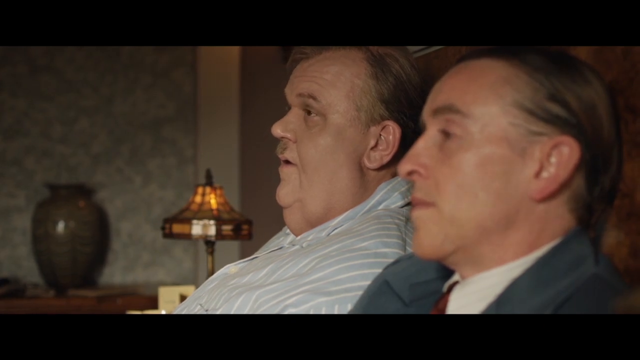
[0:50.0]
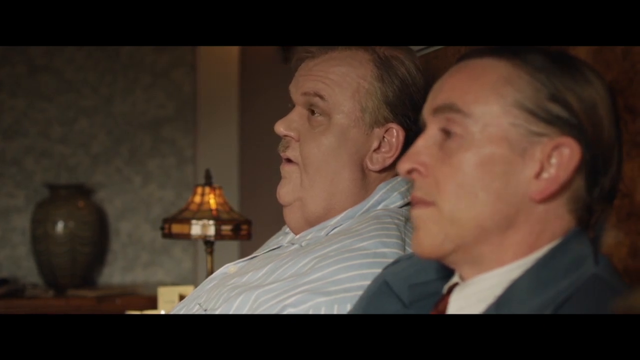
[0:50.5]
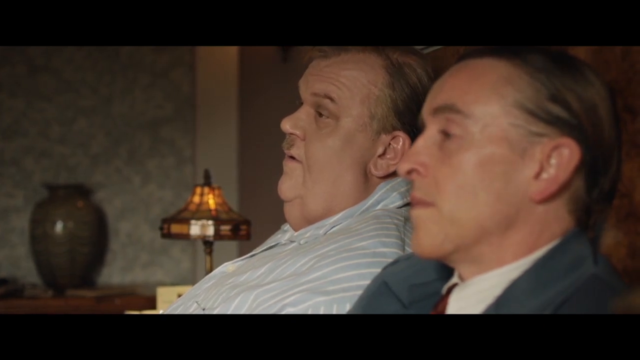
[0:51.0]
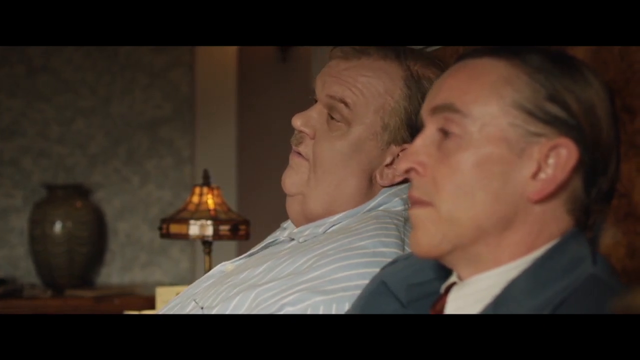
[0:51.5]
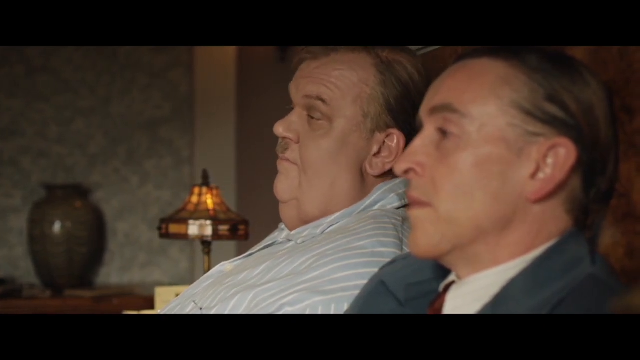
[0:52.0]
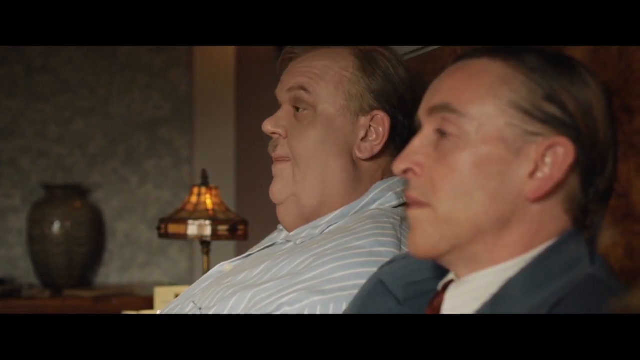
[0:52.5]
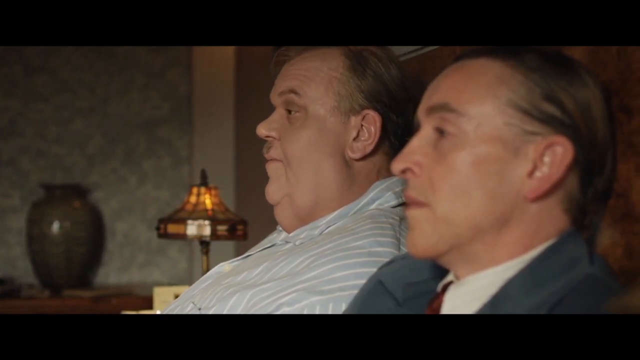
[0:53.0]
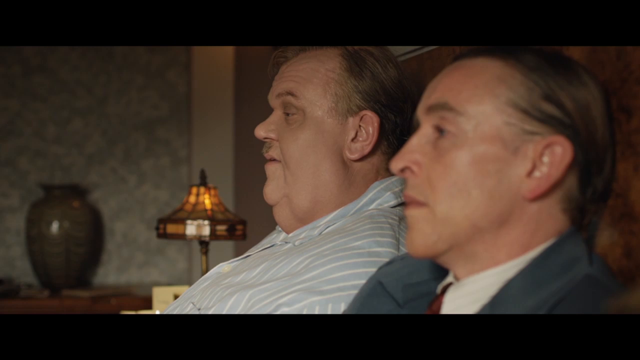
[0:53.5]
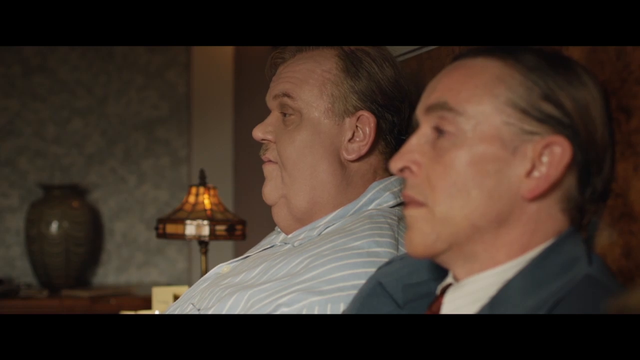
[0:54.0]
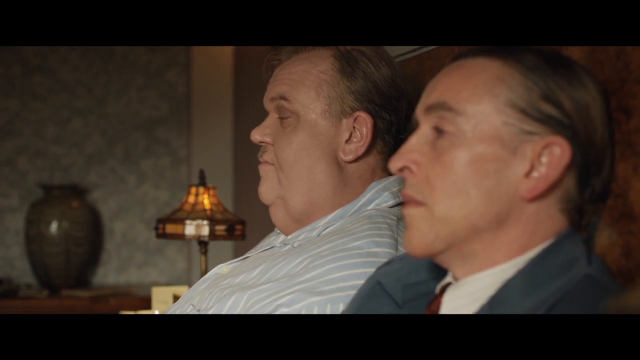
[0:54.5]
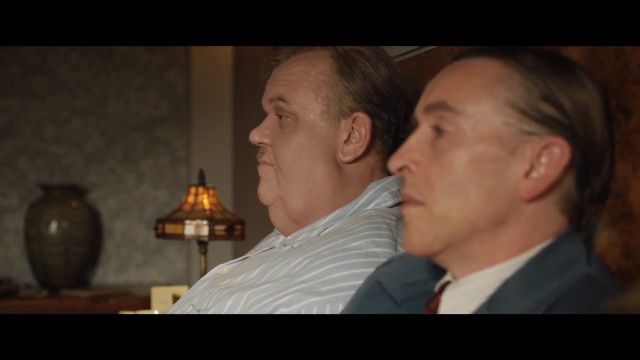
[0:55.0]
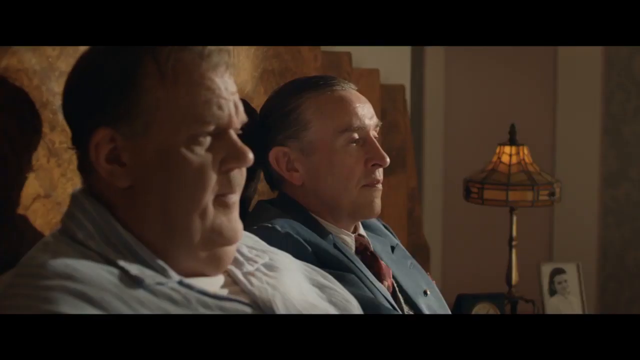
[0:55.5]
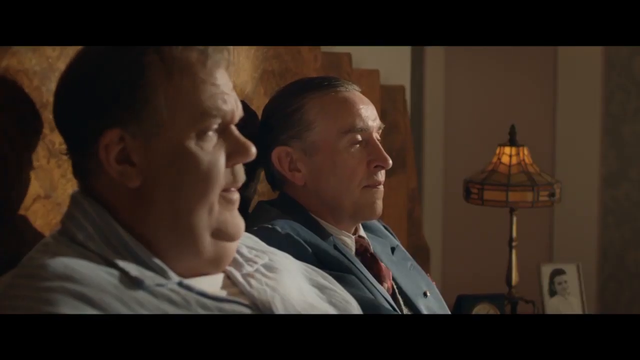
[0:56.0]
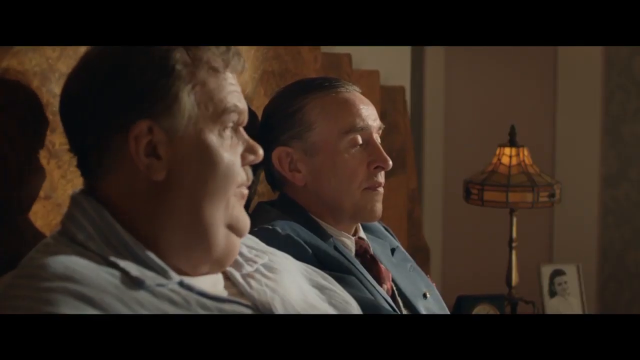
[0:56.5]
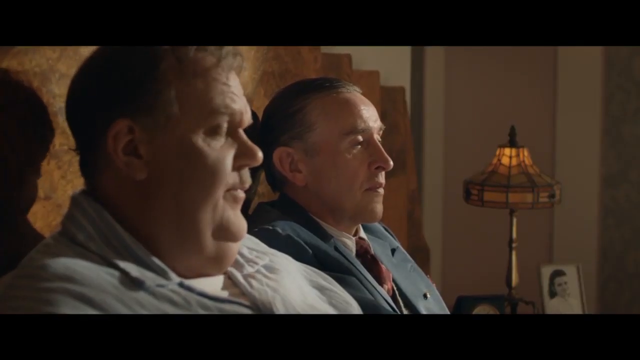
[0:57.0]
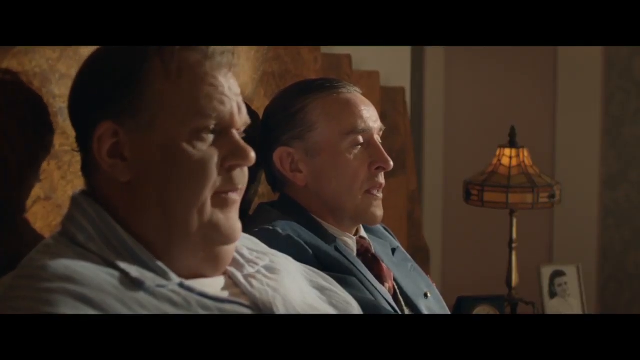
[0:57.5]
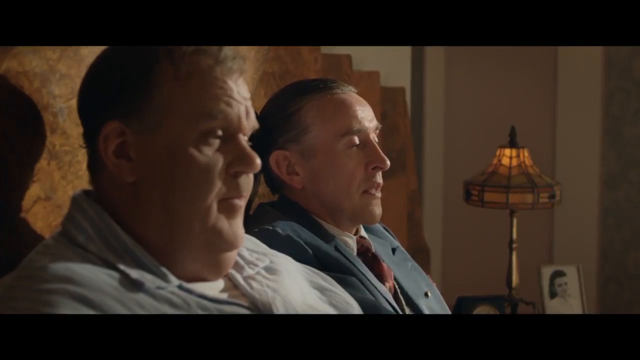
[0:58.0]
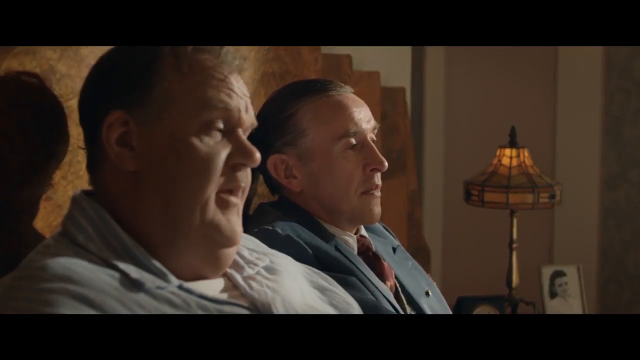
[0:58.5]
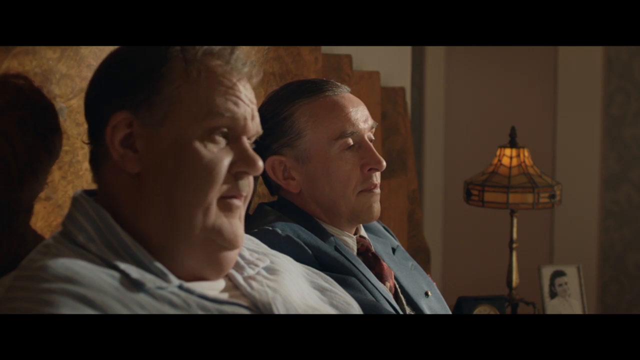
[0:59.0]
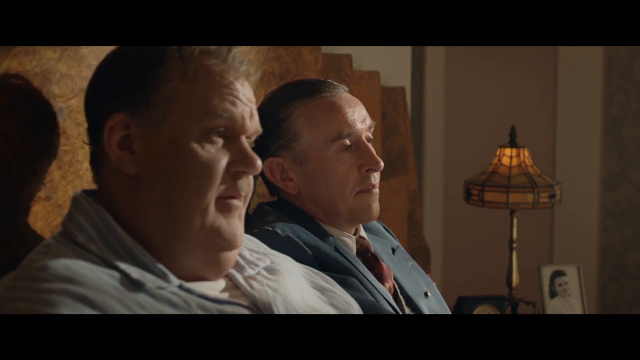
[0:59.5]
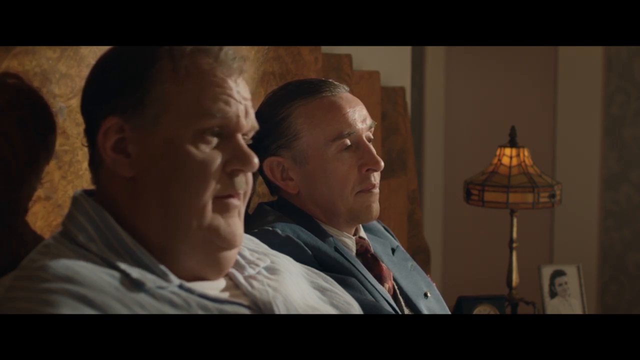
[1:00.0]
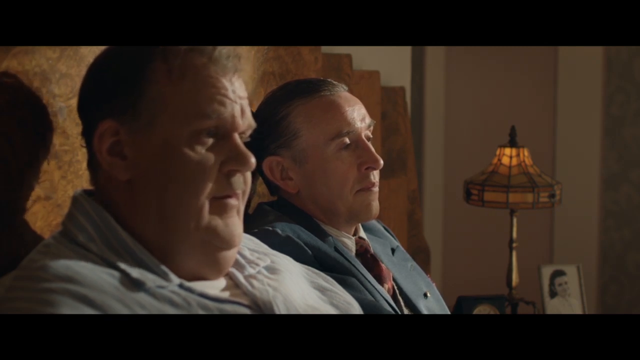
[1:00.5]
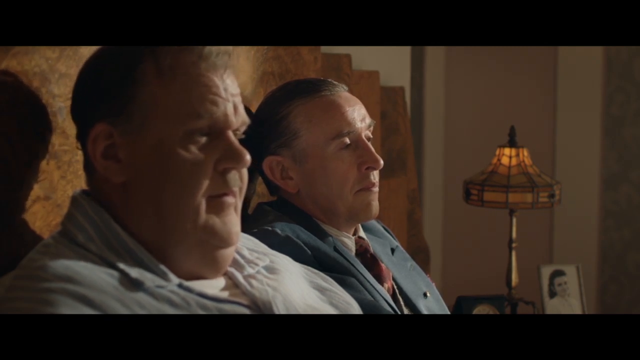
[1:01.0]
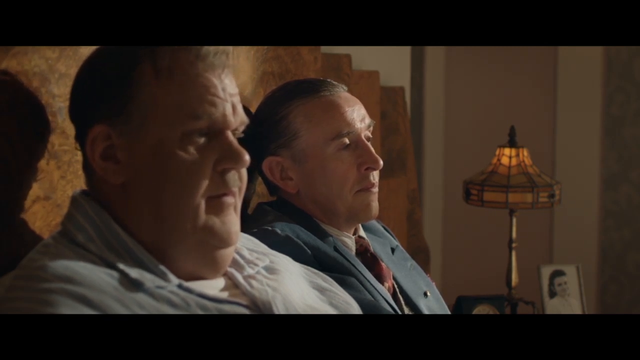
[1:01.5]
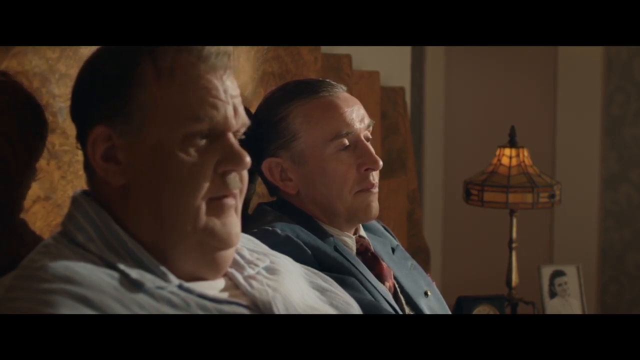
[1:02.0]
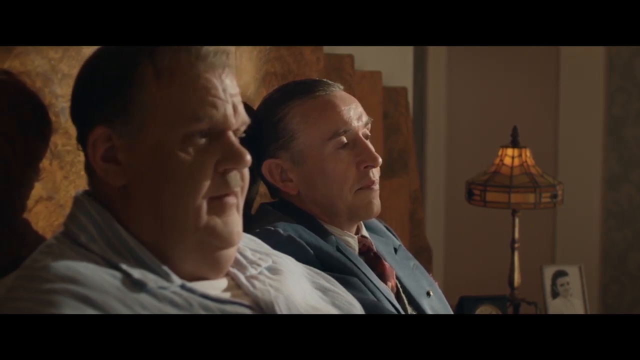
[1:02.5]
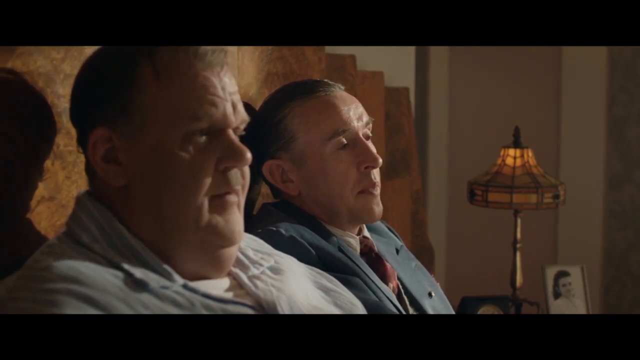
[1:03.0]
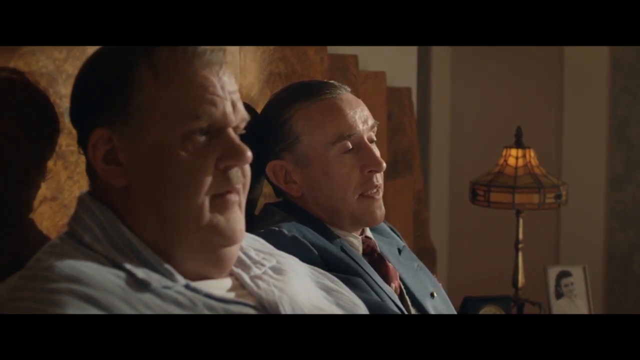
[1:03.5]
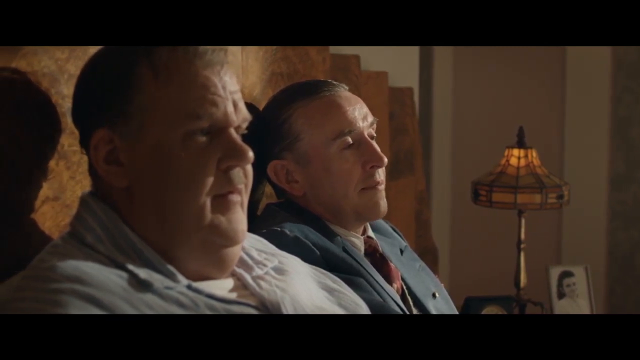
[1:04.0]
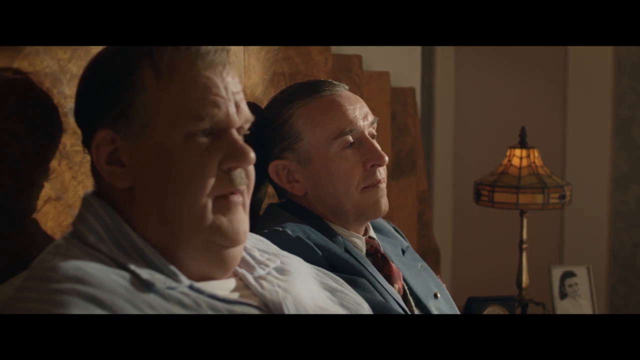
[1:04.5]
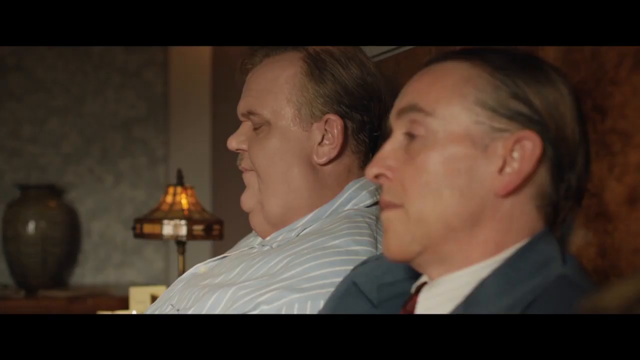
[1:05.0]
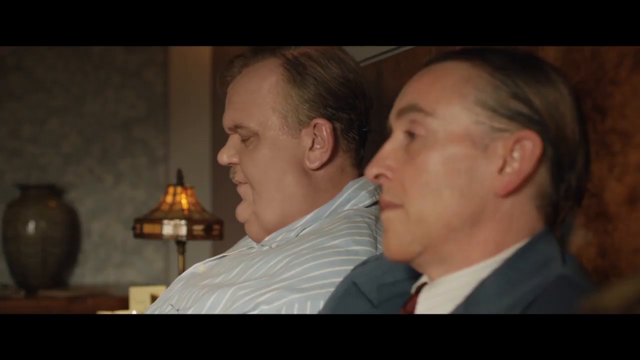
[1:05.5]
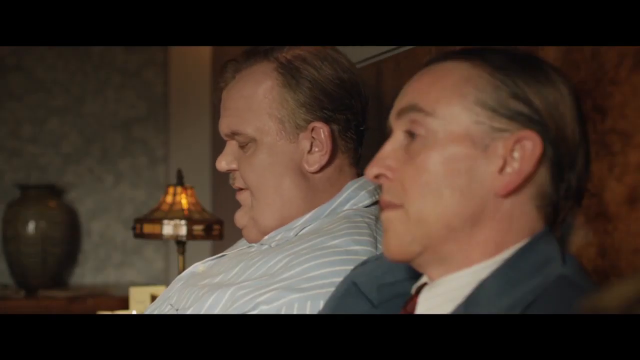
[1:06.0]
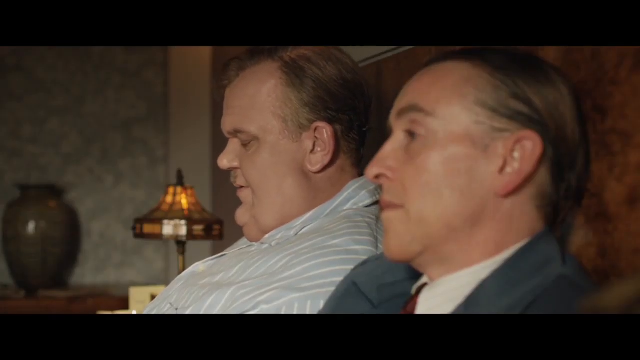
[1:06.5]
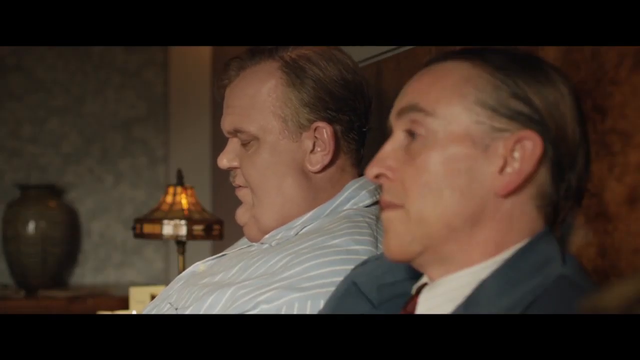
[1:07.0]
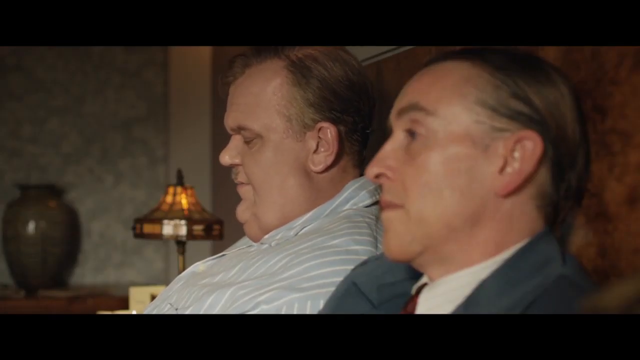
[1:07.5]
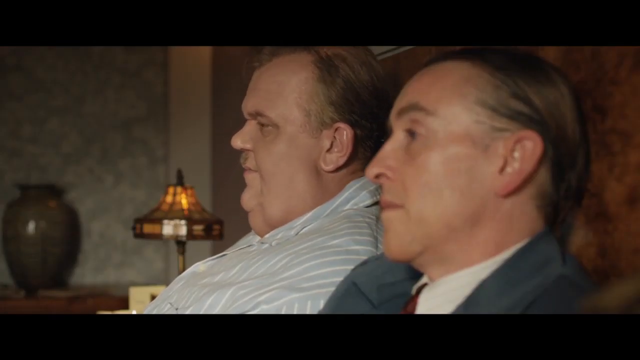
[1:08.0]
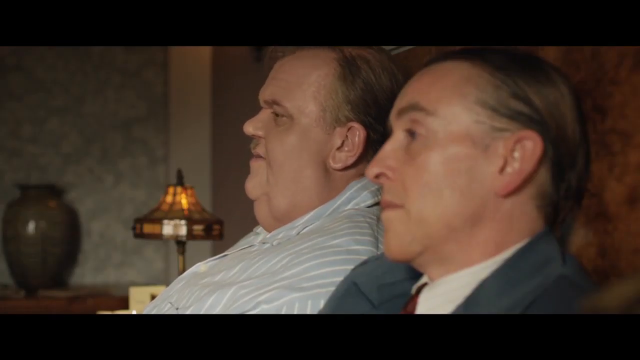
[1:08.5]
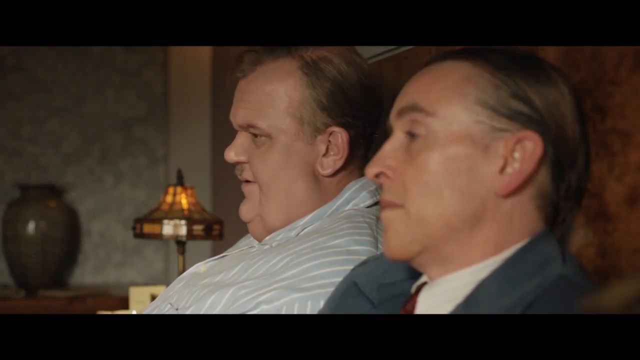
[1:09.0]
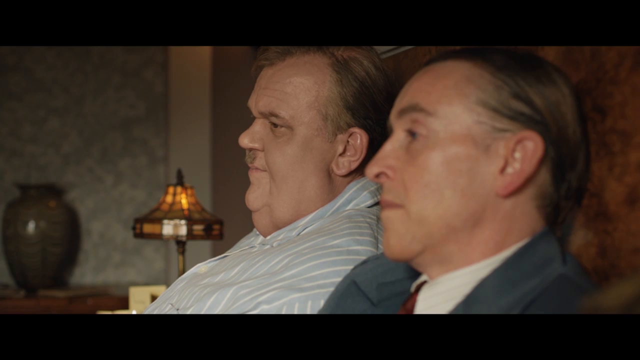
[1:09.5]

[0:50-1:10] A zoomed-in camera angle shows the left side of the faces of the heavyset middle-aged man and the thin middle-aged man lying side by side, with the green reflective vase and a brown glass lamp on a nightstand visible in the background. The heavyset man speaks with his eyes half closed, his mouth moving up and down, and the thin man nods twice. The camera changes to a zoomed-in angle slightly to the left, showing the right side of both men's faces. To the left of the thin man is a brown glass lamp with a brass stand, and a silver picture frame with a white background shows a young woman of about mid-20s with shorter dark hair. The heavyset man looks slightly to his left at the thin man, then turns his head back to look straight ahead. He speaks, nodding once. The thin man looks forward as if in deep thought, nods twice and opens his mouth to speak. The camera returns to the left side of the men's faces, and the heavyset man speaks and nods twice.